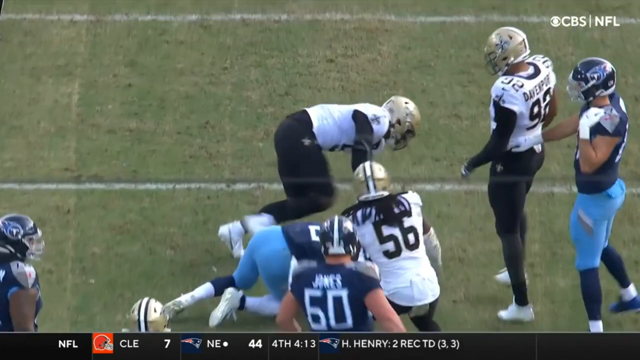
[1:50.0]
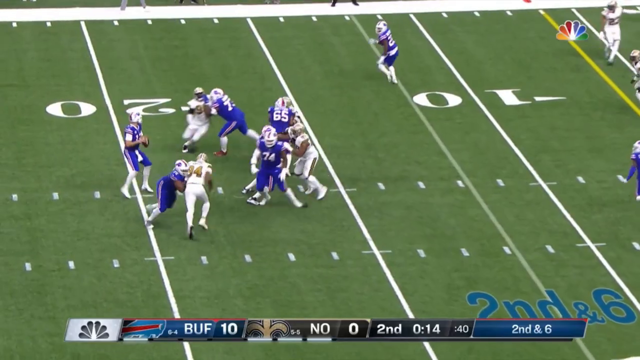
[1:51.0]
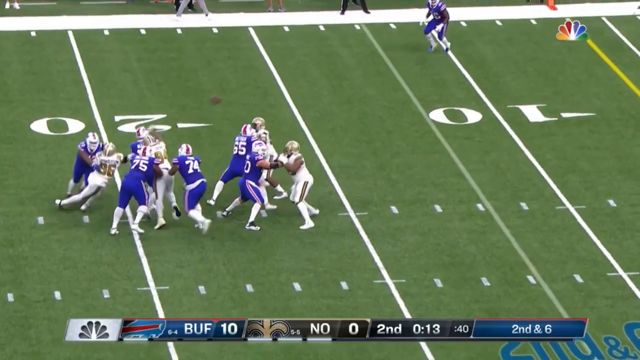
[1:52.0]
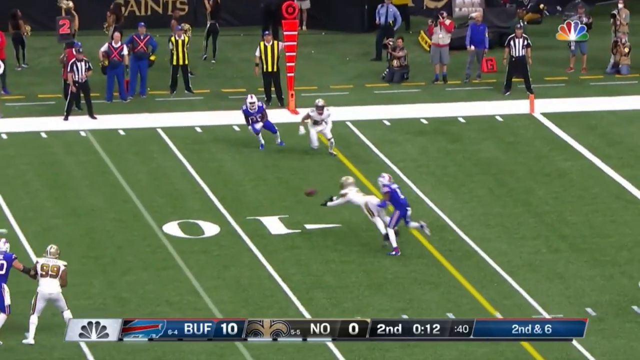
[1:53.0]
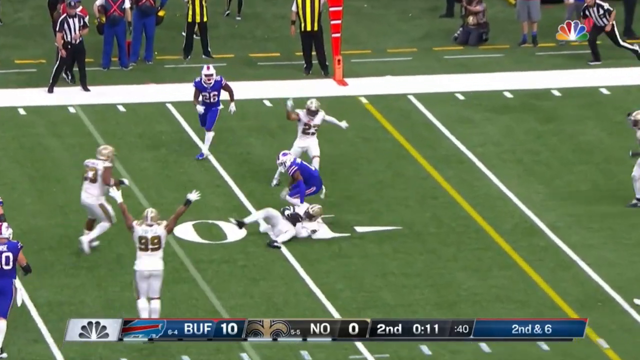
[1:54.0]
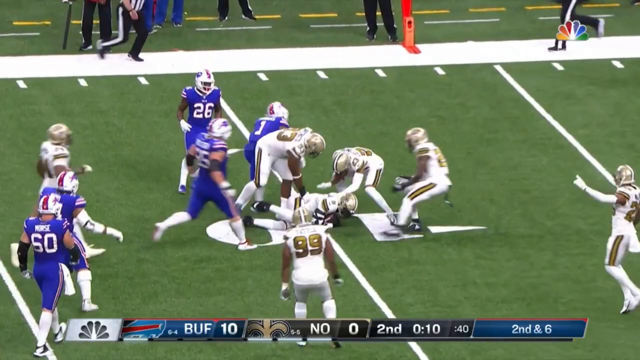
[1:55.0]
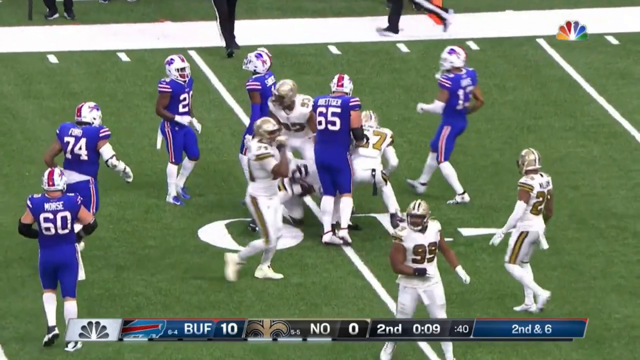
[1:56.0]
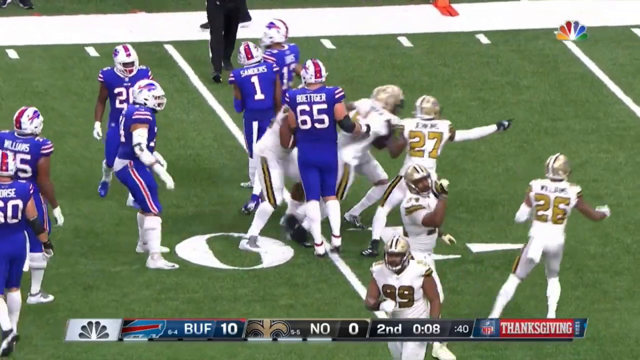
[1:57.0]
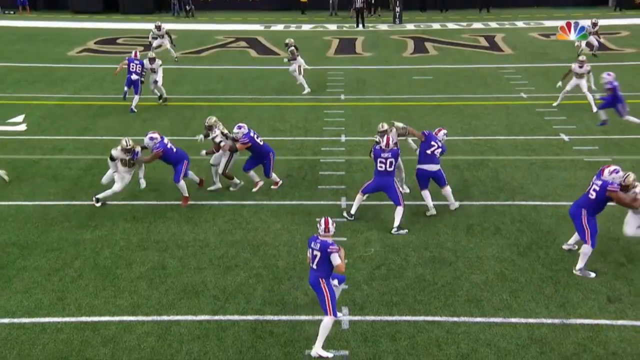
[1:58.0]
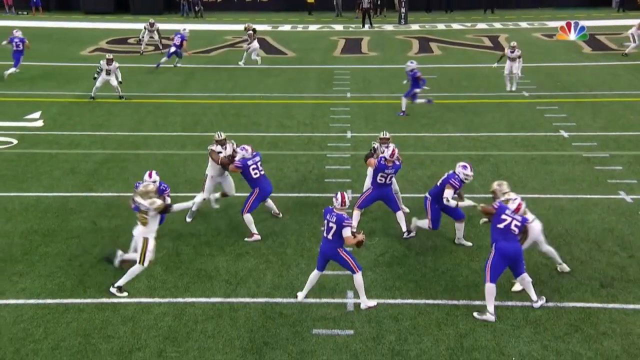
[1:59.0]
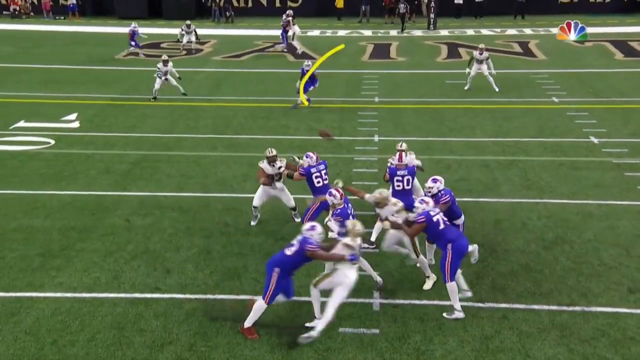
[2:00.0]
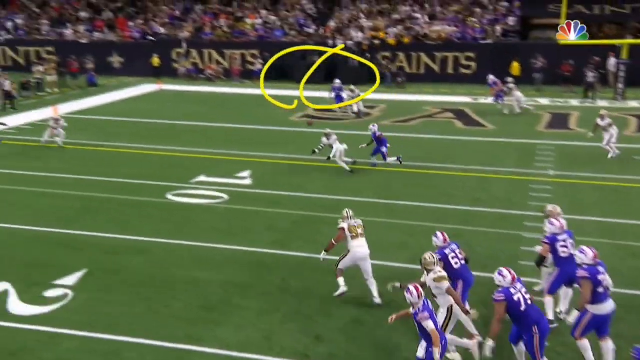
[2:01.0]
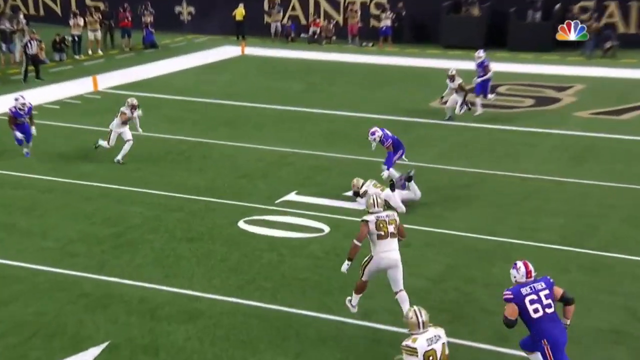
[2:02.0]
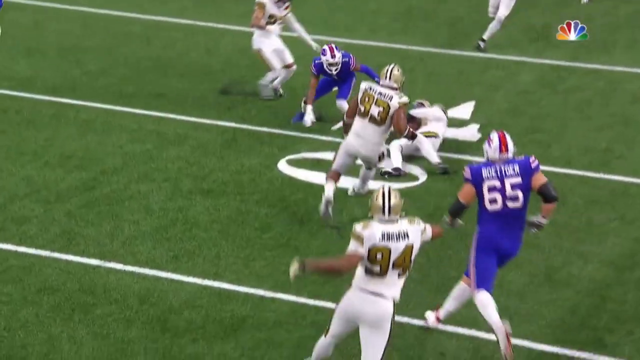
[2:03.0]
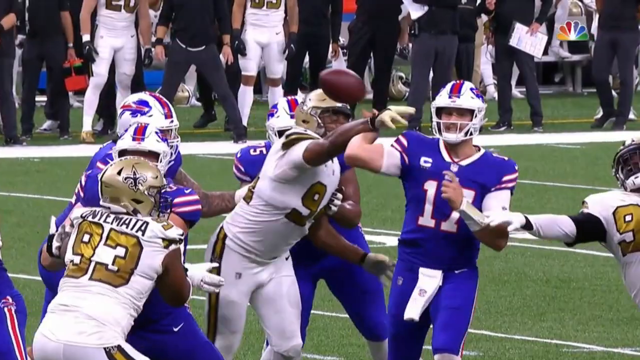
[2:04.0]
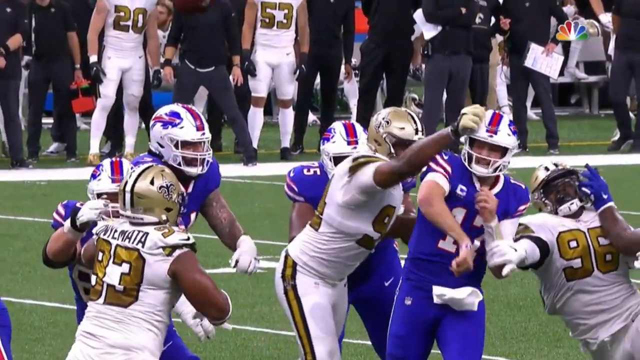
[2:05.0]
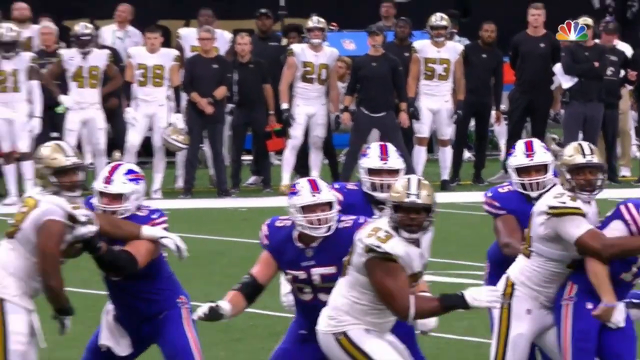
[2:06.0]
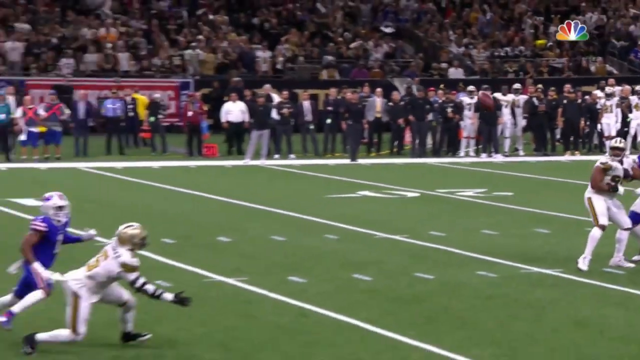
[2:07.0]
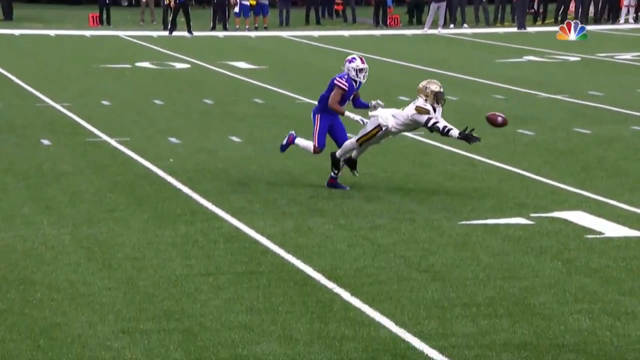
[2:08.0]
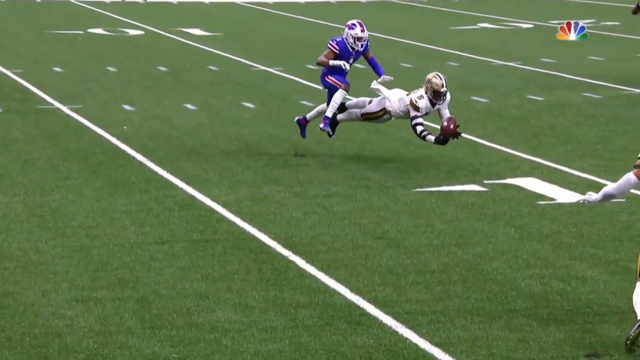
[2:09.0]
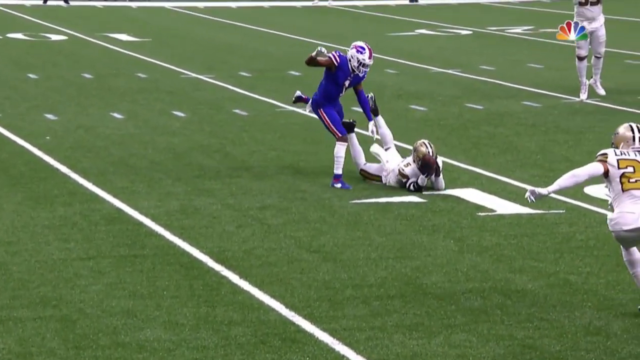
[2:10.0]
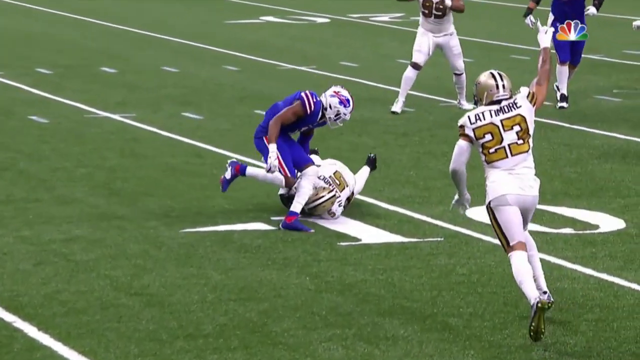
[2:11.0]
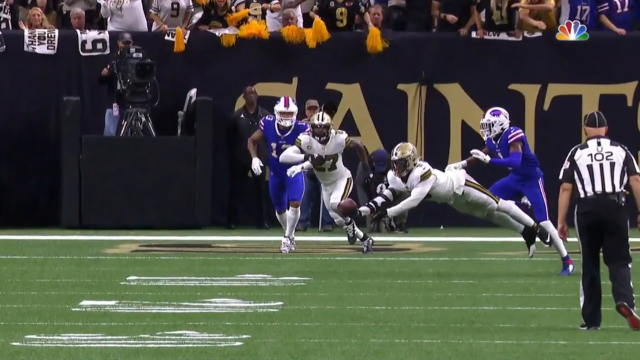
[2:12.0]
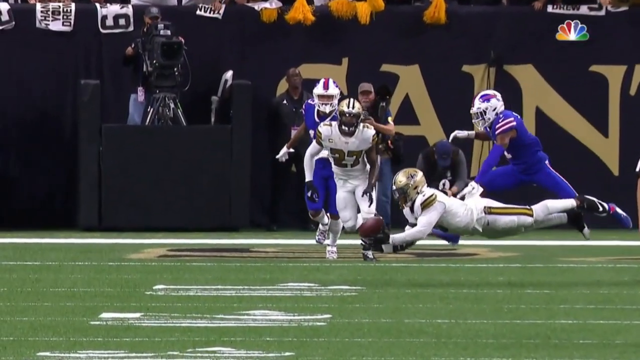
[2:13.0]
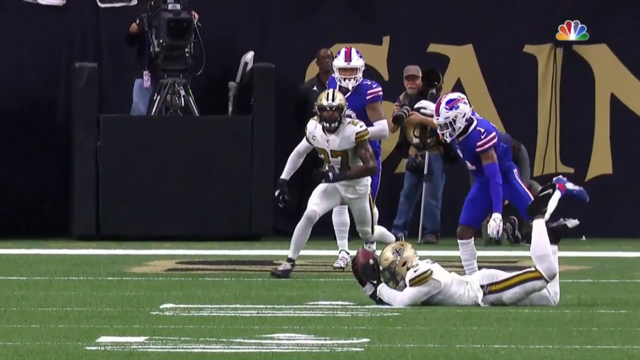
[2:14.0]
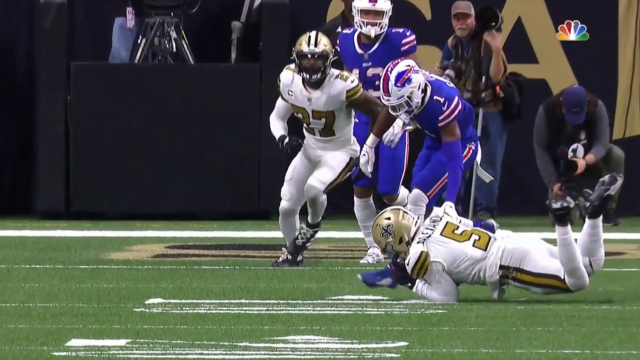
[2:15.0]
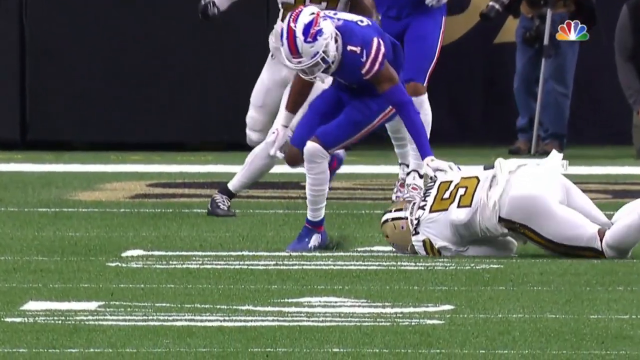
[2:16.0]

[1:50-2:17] The final highlight of the New Orleans Saints reel shows Buffalo leading New Orleans 10-0 in the last few seconds of the second quarter, at second and six. Josh Allen throws left toward a very open receiver, but the pass gets tipped: a Saints linebacker blocks it with his hands, and number 5, Quan Alexander, a linebacker, catches it in midair for an interception. The reel is a highlight reel for Alexander, number 5.